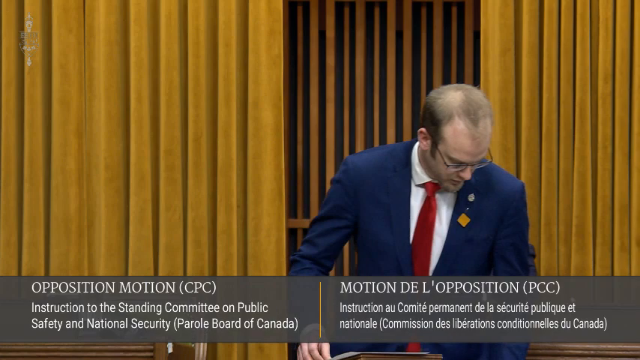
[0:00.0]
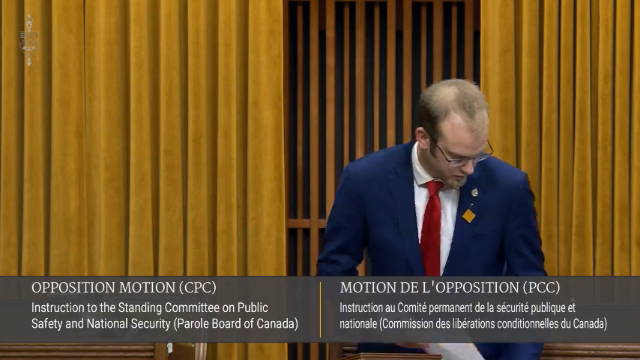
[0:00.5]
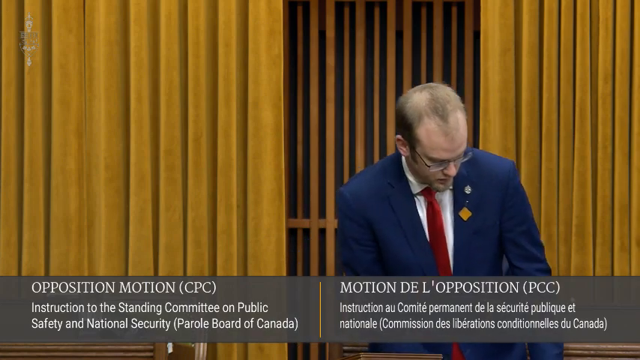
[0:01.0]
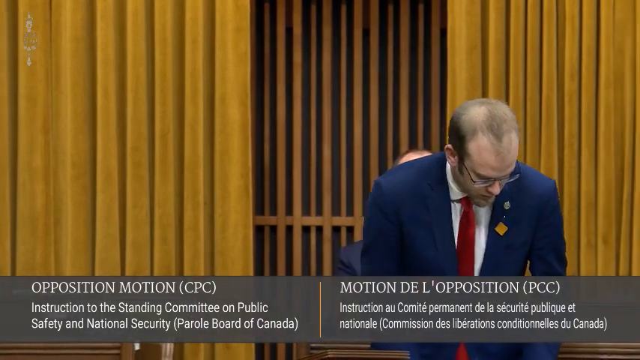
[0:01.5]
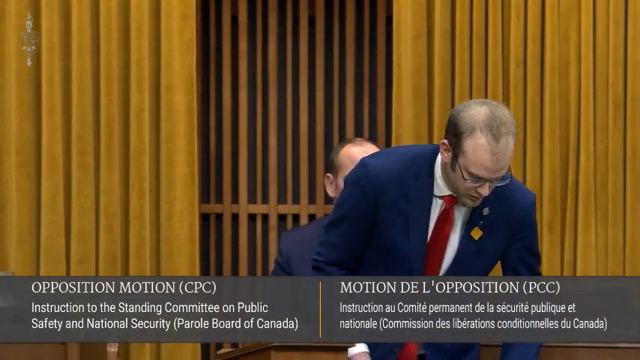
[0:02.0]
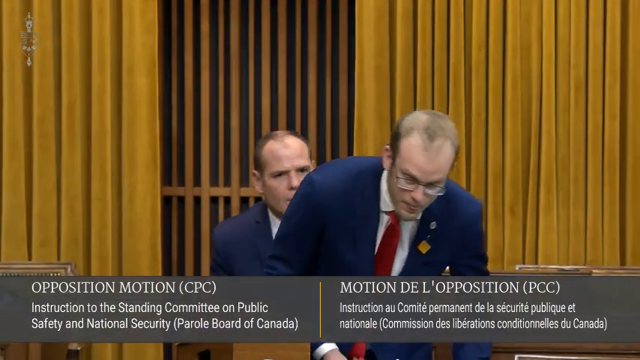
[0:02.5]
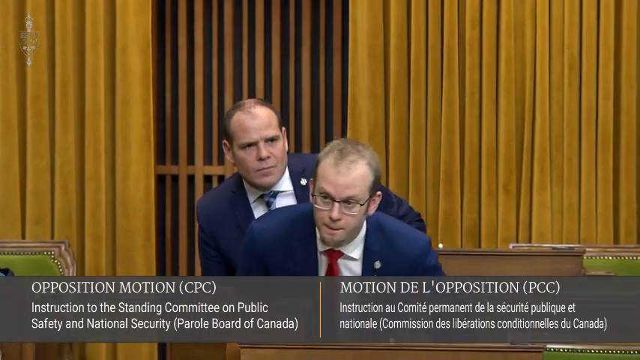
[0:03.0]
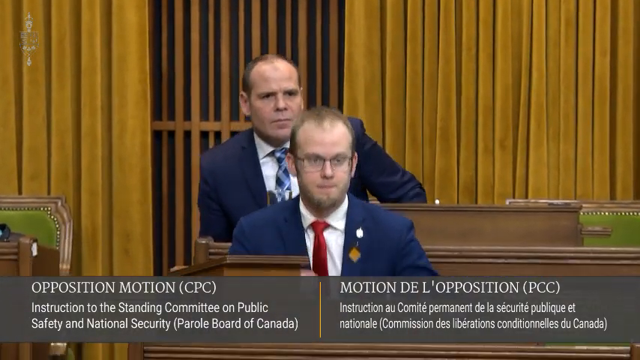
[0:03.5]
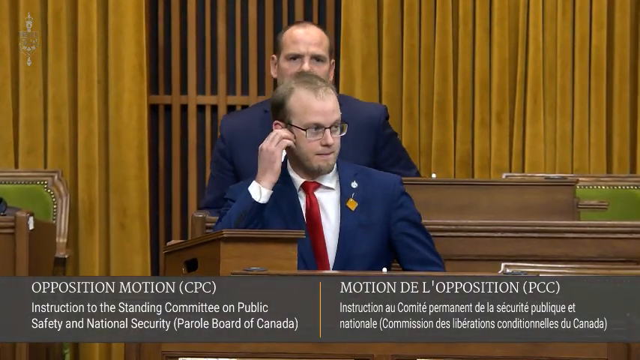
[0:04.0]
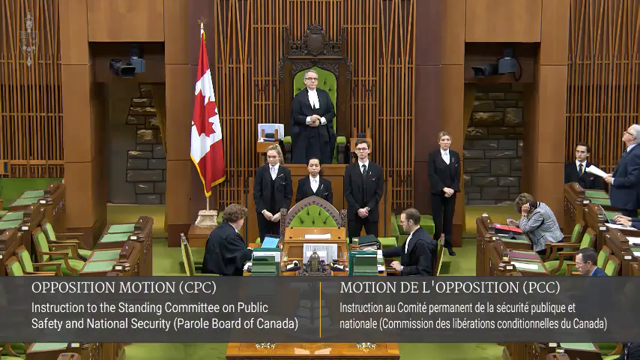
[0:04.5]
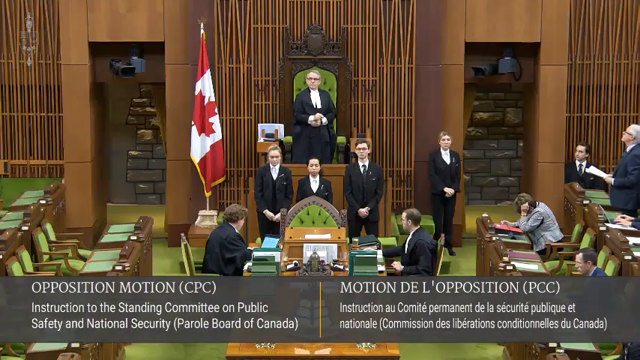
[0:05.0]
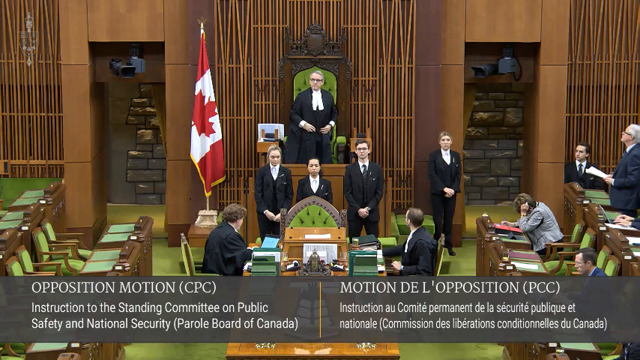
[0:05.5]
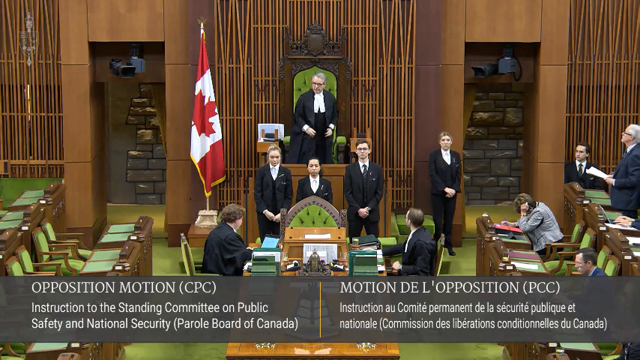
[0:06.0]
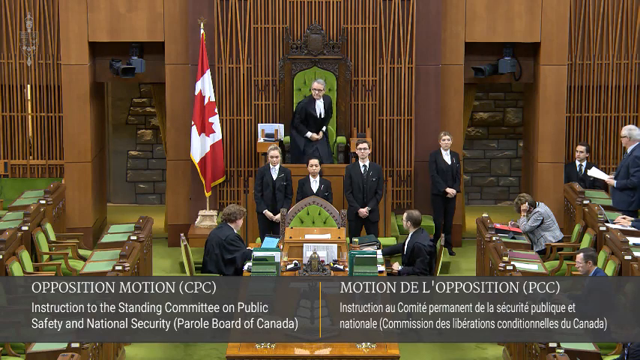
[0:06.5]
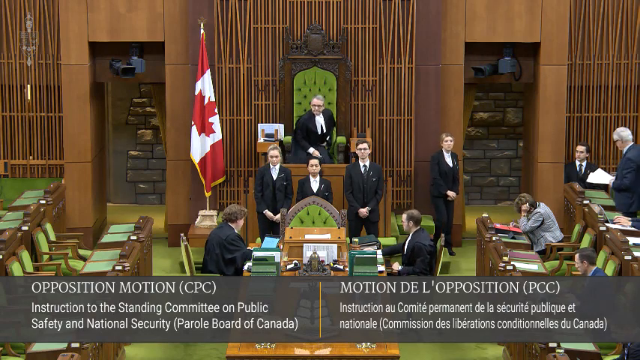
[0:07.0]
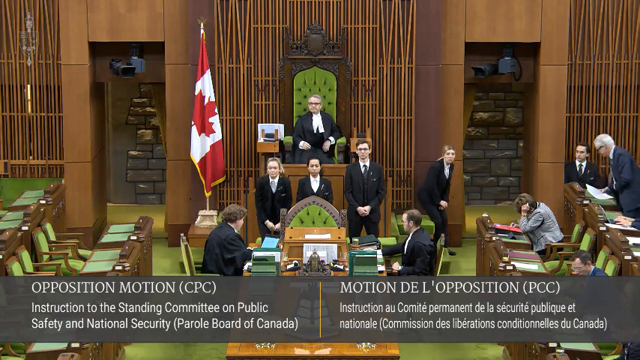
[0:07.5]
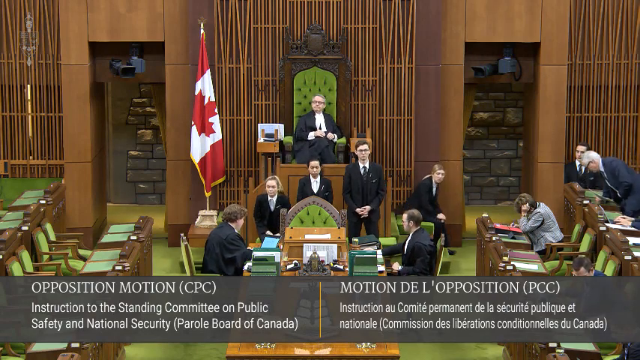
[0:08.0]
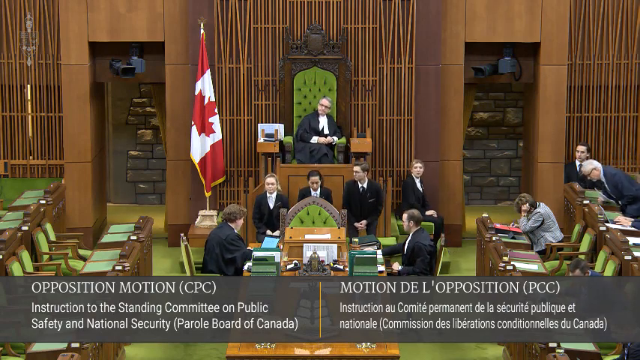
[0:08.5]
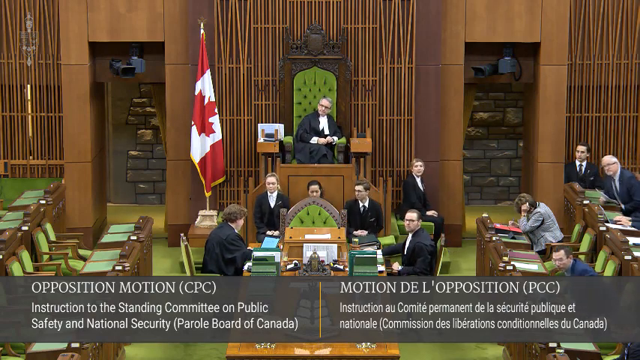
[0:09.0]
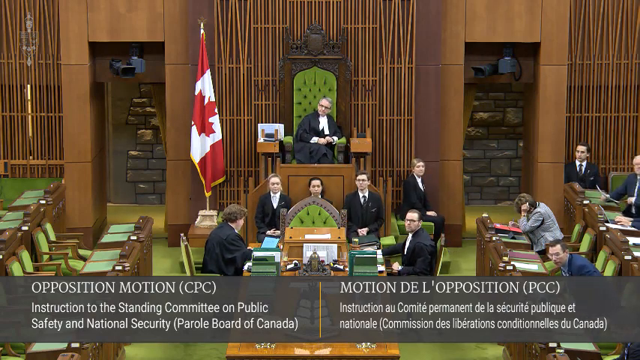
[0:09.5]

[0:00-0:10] The video opens on two men in suits sitting in a large room, in wood pews of some kind, with some sort of gold curtain behind them. The scene then transitions to a wide view of a courtroom that looks like it has a wood and tan background. A judge is standing on his big chair, and three people in black suits are standing in front of him. One person in a black suit is standing to the right, with a Canadian flag to the left of him. Around the room are many chairs, tables and seats, all with green upholstery and wood, and a diverse group of individuals is in these seats. Everyone at the front of the room begins standing and then sits down at the same time.